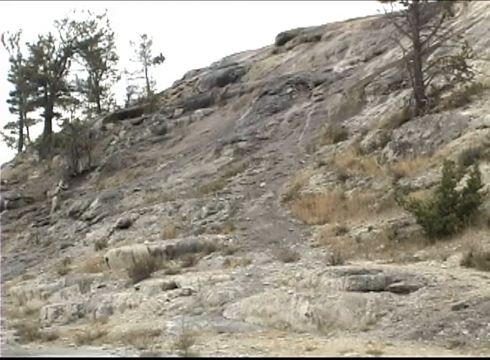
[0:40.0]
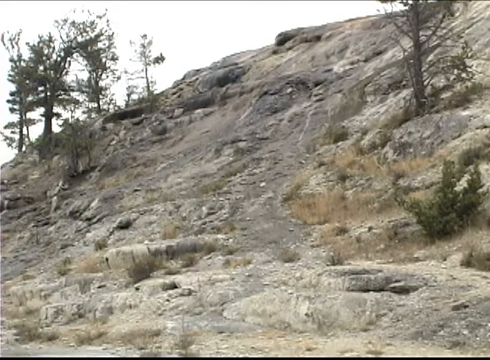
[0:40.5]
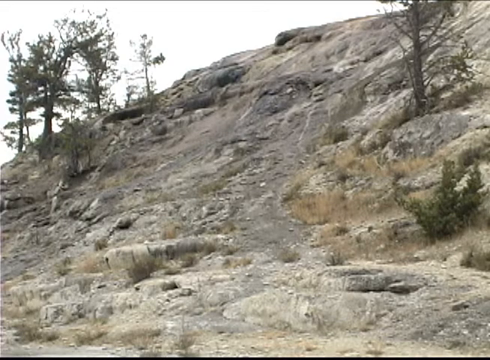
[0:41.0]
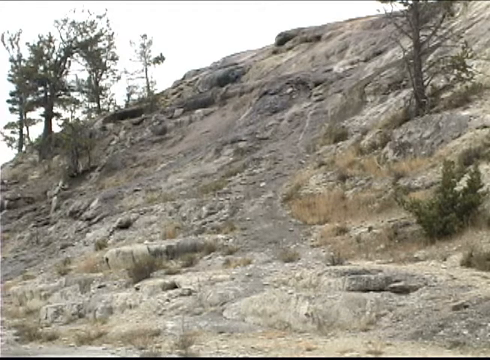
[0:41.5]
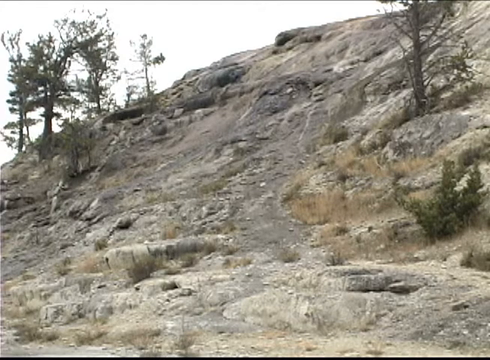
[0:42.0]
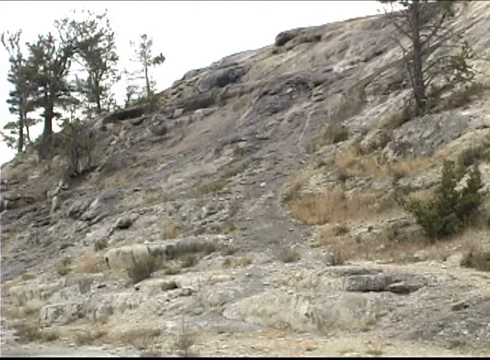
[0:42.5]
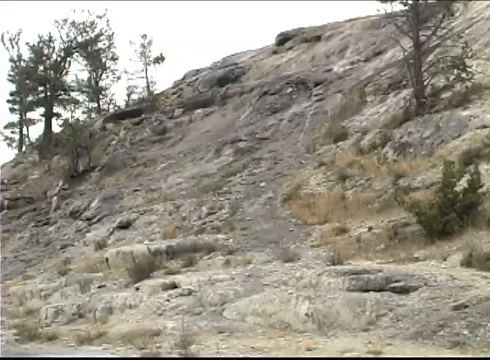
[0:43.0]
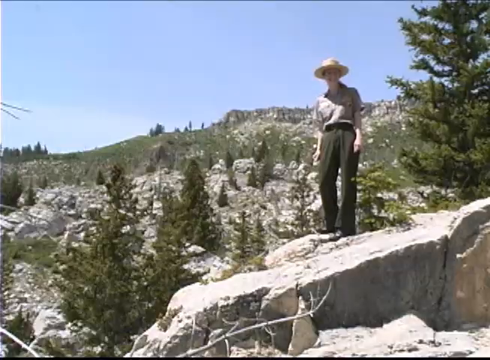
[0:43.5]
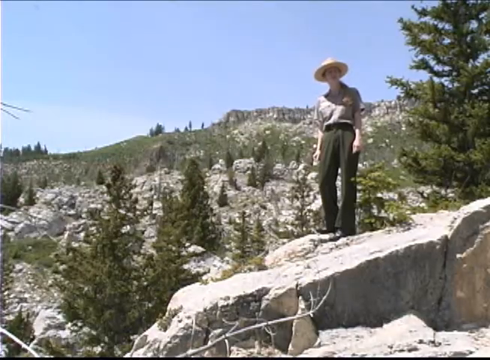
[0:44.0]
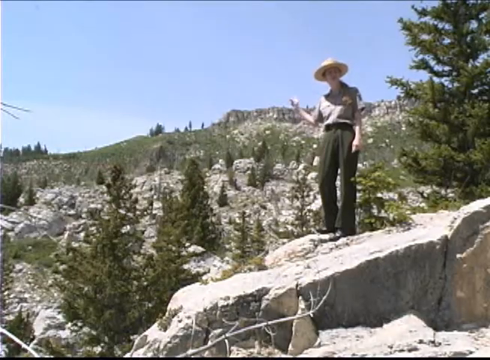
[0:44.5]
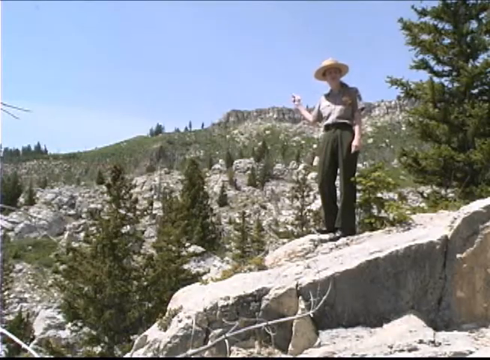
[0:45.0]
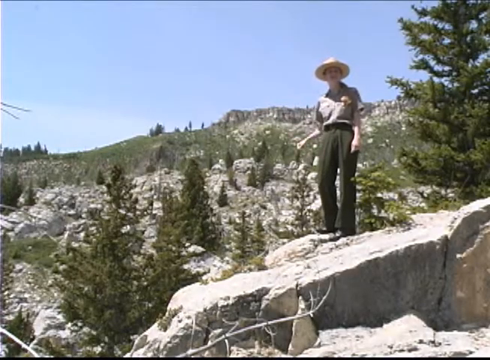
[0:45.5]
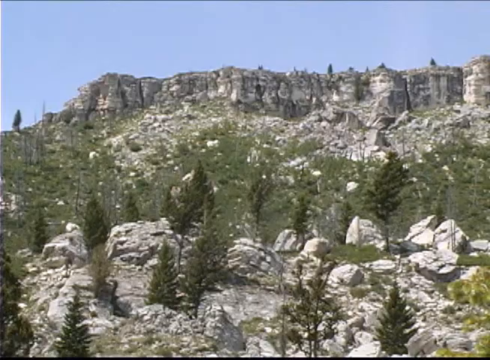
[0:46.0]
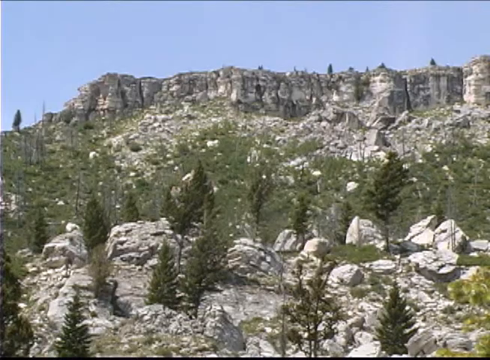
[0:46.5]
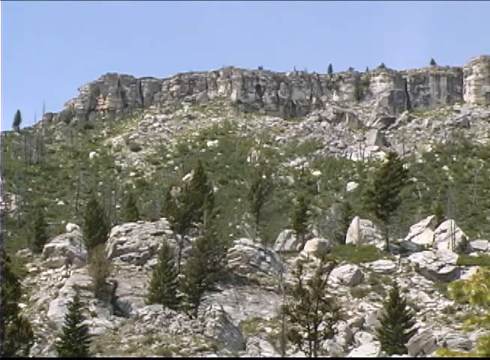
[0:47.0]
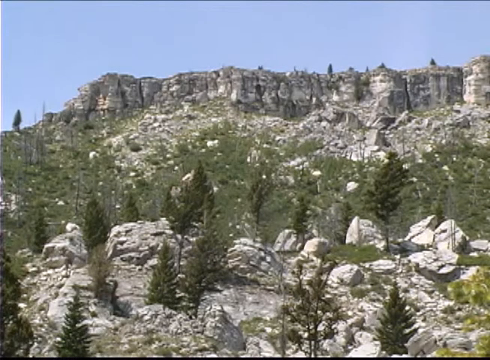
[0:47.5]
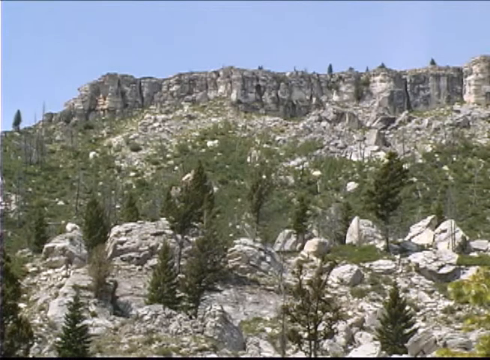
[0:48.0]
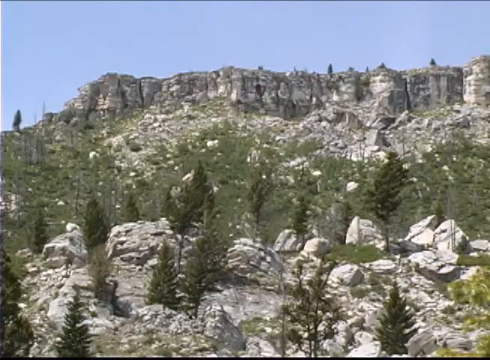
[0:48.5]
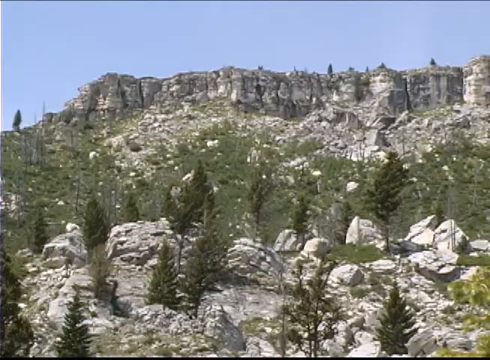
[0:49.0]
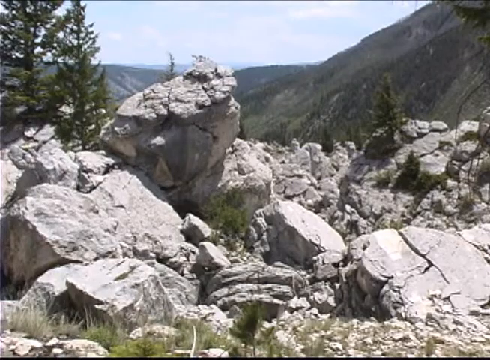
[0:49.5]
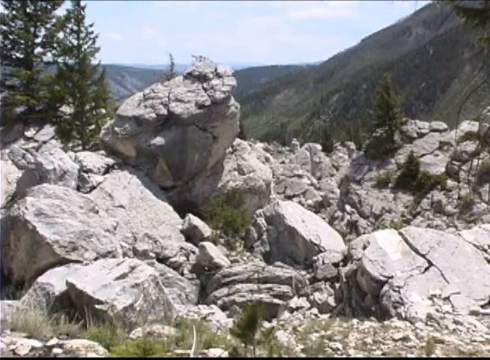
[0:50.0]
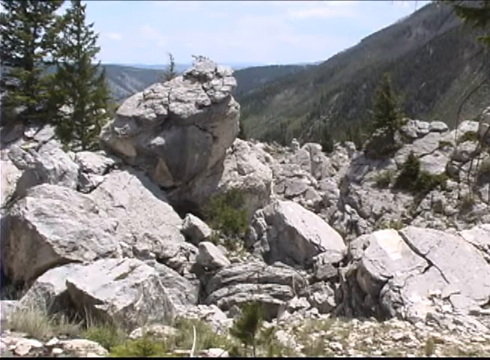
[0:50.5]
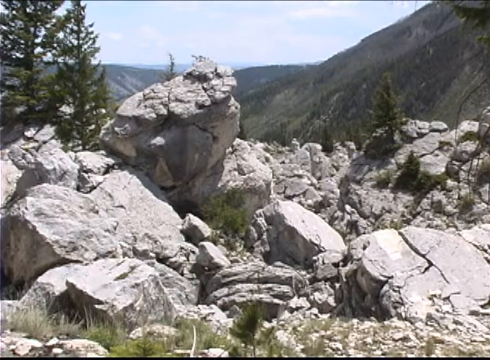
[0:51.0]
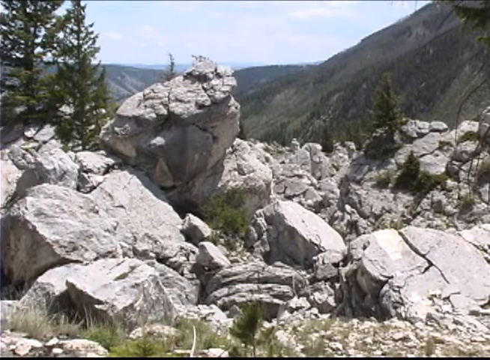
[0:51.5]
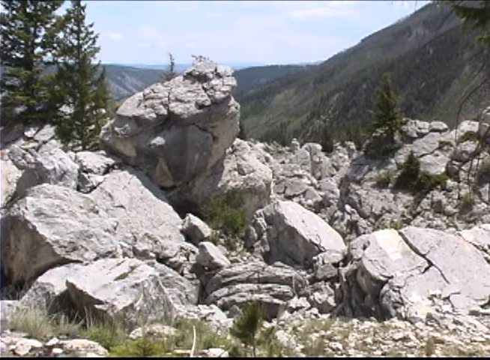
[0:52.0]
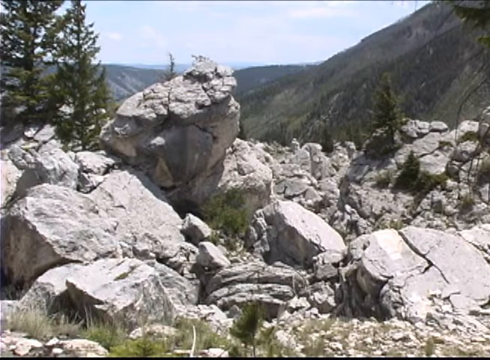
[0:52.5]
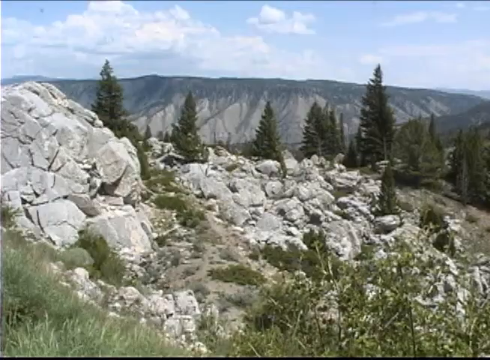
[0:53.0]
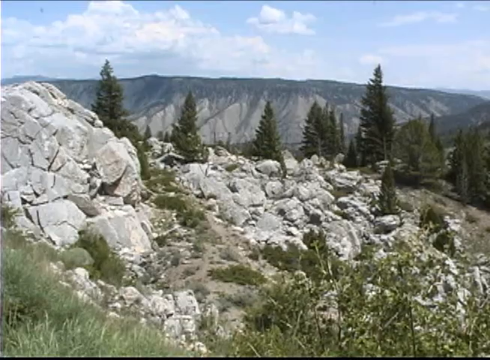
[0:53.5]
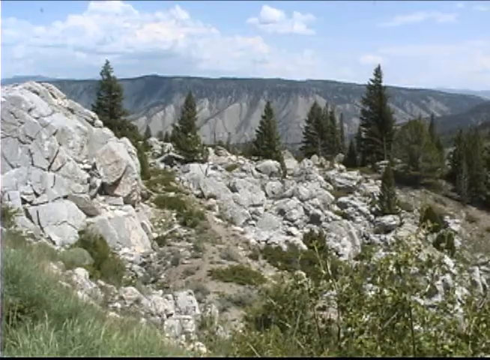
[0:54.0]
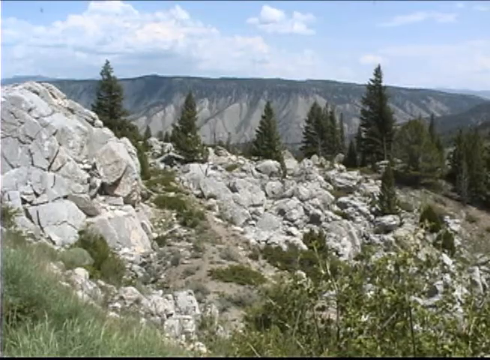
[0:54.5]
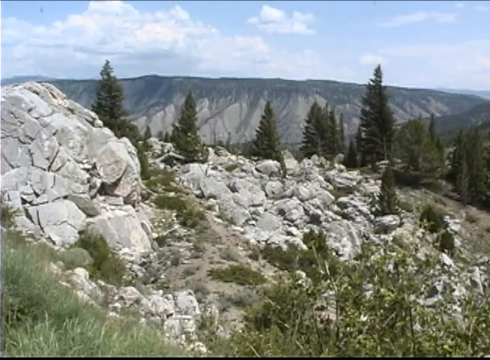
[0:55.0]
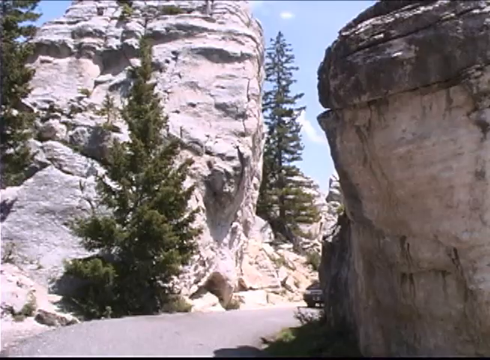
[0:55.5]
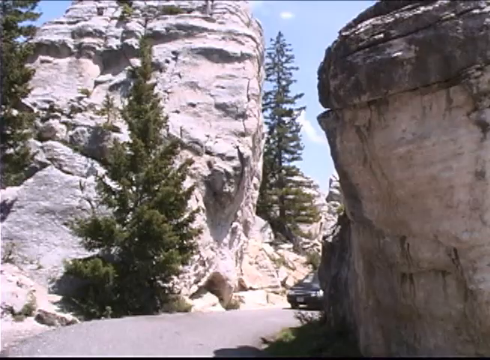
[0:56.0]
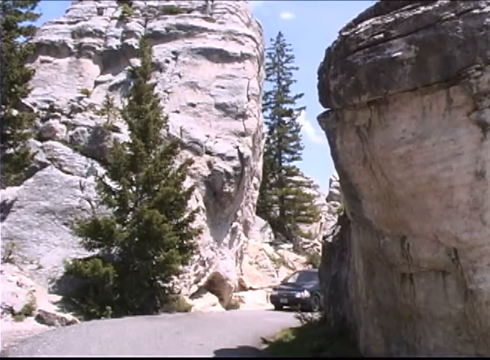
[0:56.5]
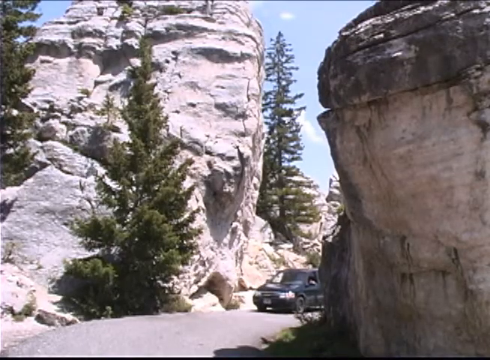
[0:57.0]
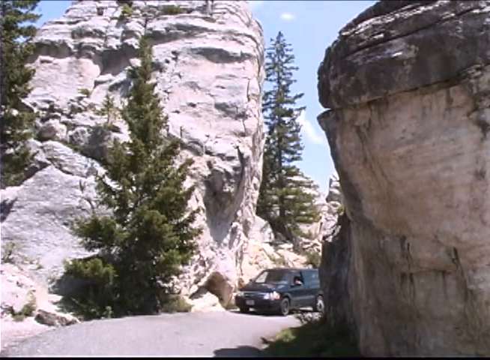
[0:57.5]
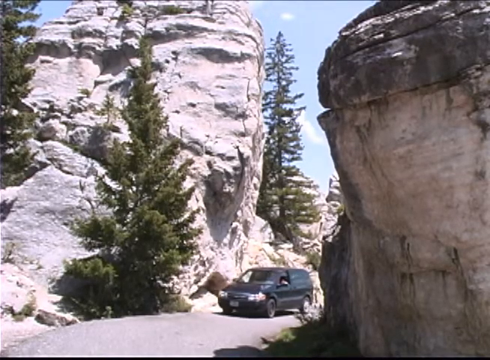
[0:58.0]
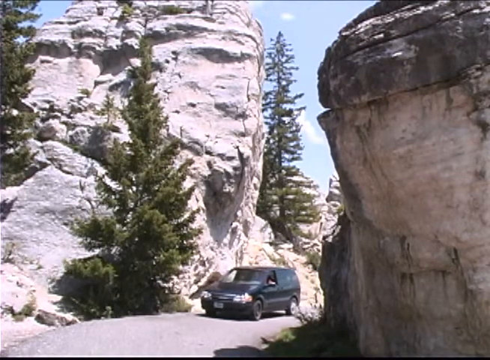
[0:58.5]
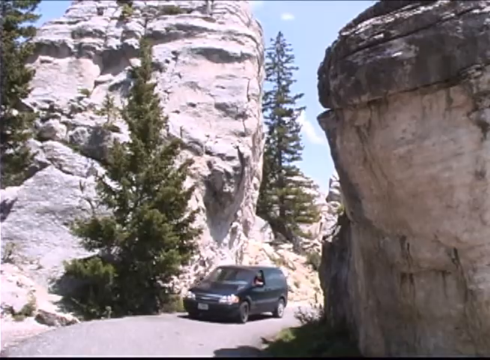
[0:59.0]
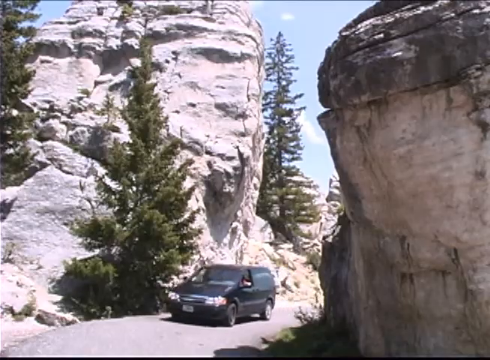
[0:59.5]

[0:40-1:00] The boy stands on a small rock or stone, with a large hill front there. There seem to be some trees and little plants, but they all seem dry. A road is then visible, and a jeep comes along it; there may also be some cars belonging to people who came to visit. The place seems to be a natural park.